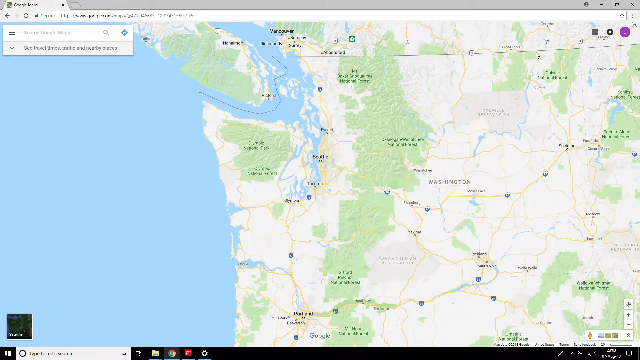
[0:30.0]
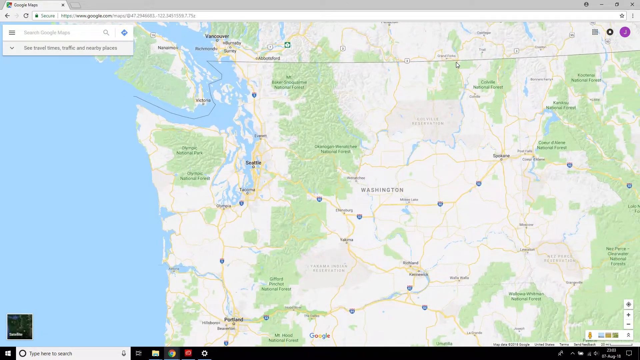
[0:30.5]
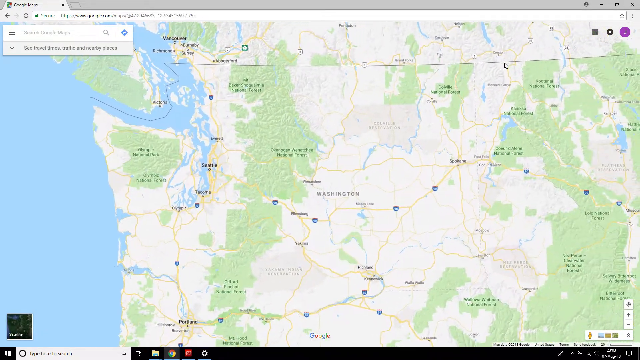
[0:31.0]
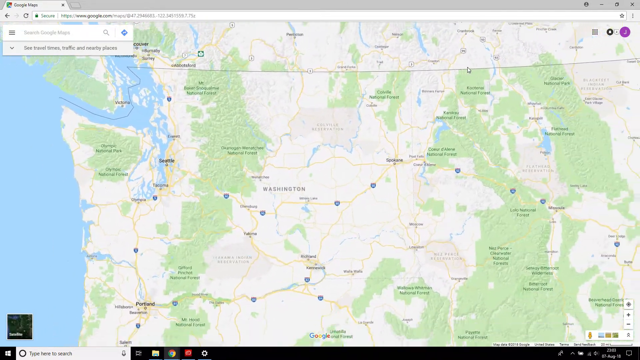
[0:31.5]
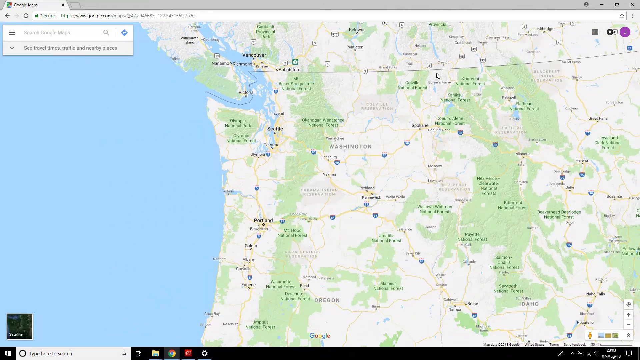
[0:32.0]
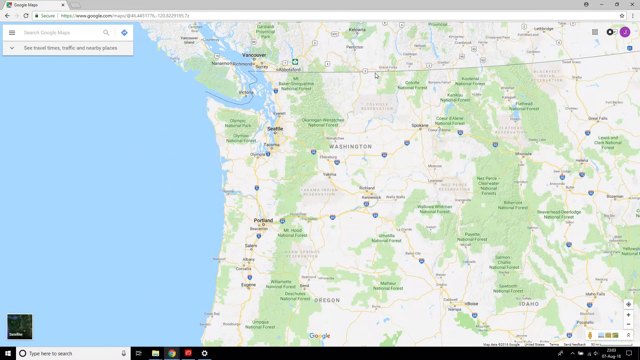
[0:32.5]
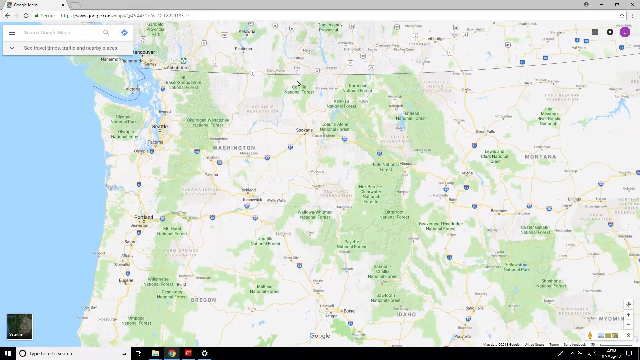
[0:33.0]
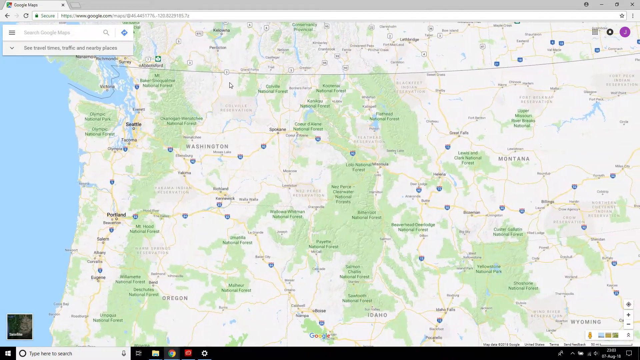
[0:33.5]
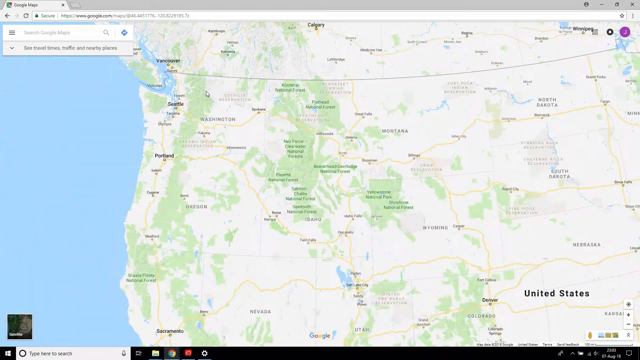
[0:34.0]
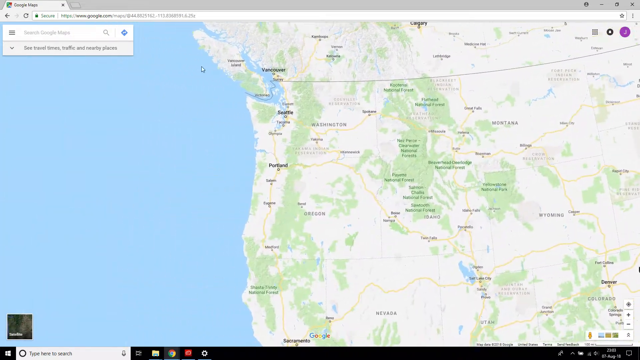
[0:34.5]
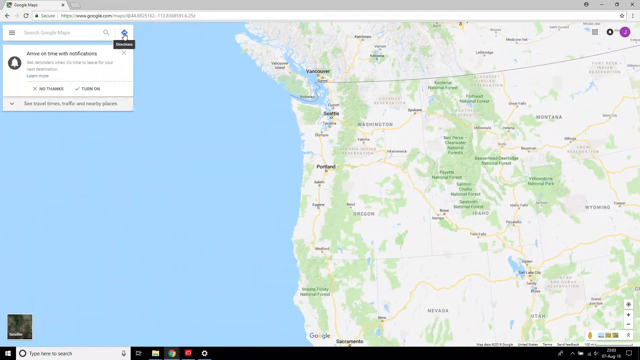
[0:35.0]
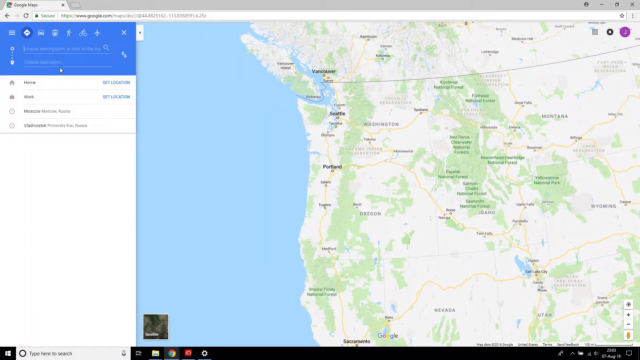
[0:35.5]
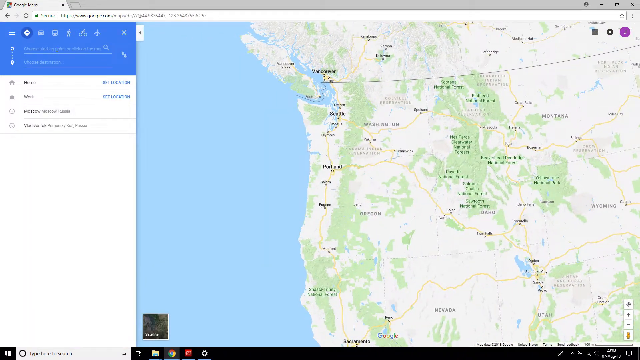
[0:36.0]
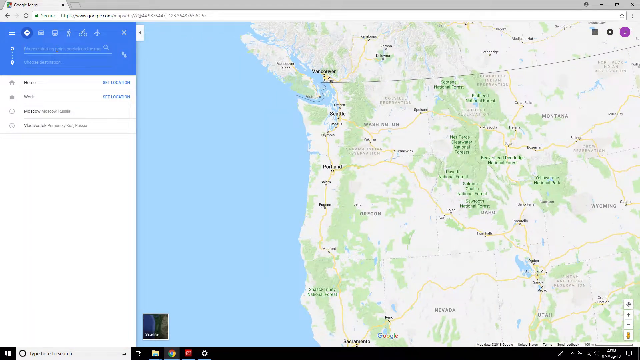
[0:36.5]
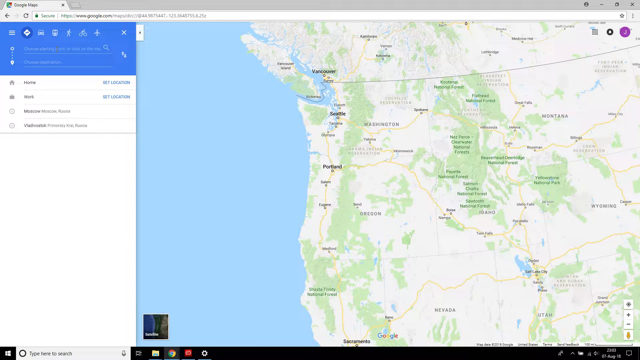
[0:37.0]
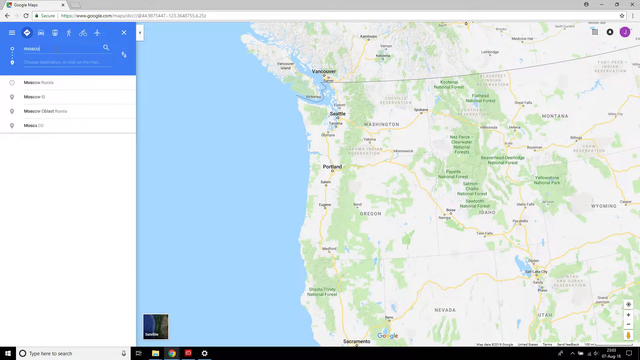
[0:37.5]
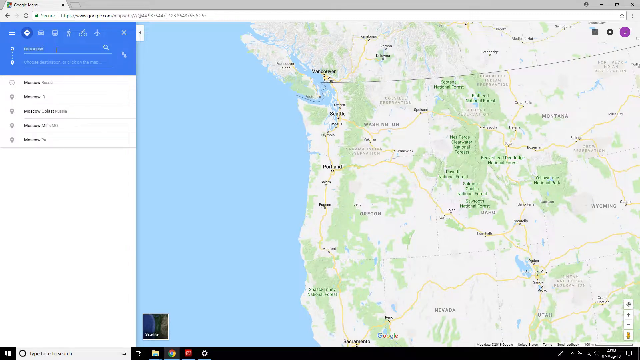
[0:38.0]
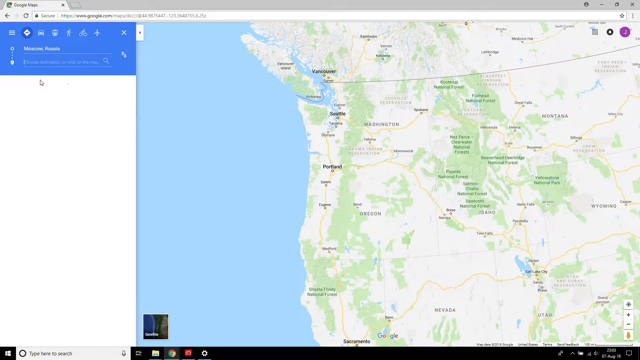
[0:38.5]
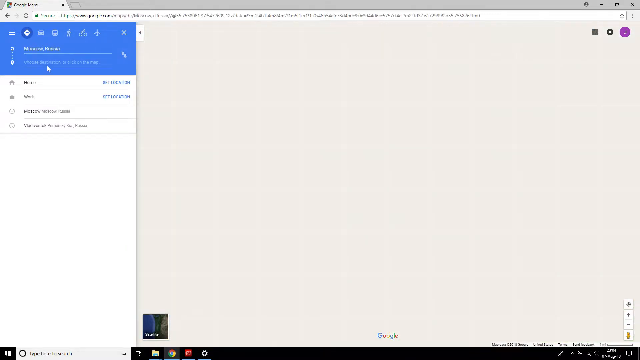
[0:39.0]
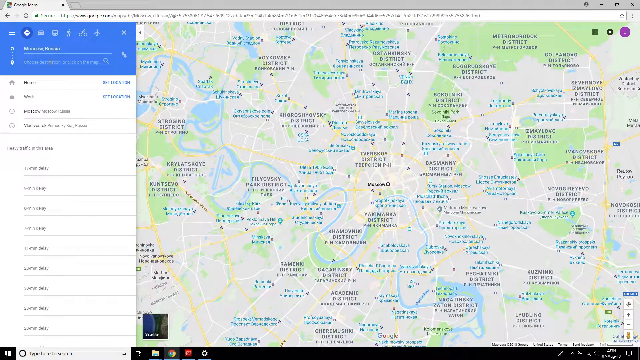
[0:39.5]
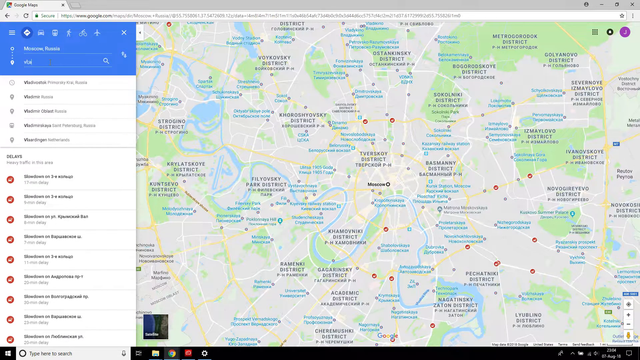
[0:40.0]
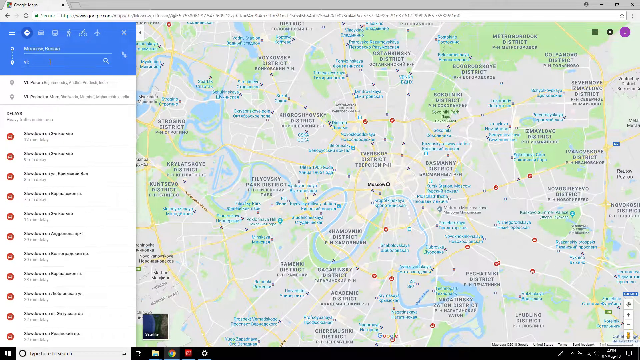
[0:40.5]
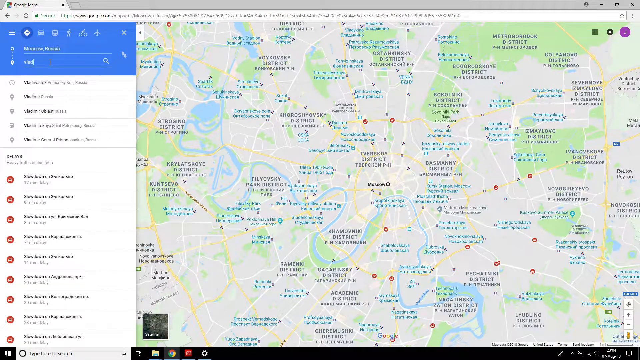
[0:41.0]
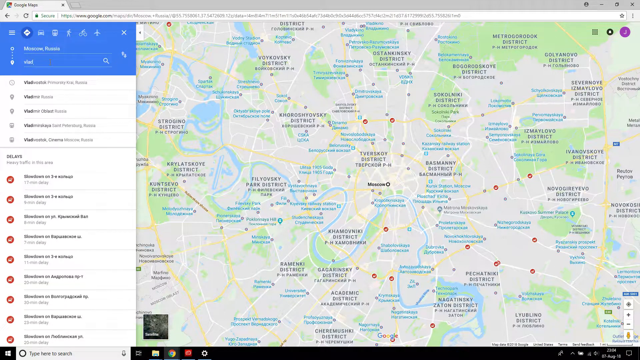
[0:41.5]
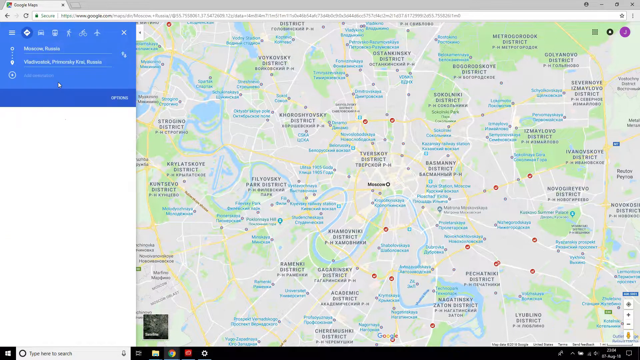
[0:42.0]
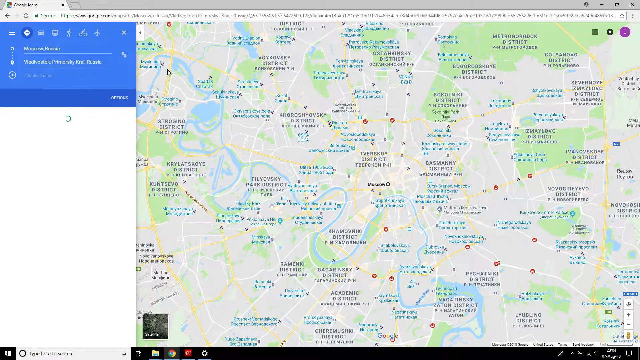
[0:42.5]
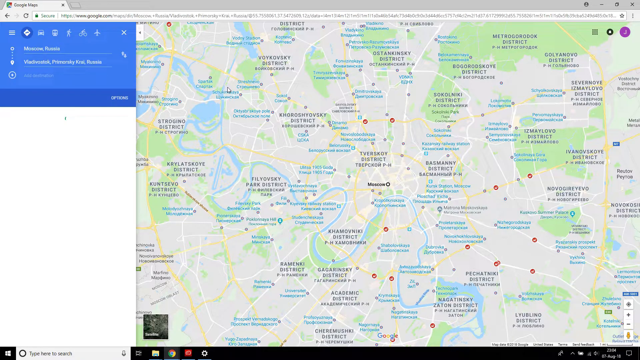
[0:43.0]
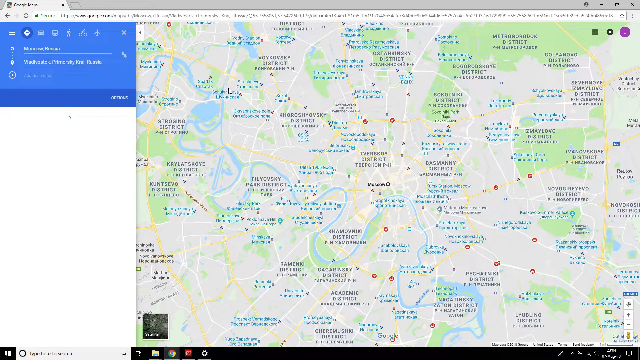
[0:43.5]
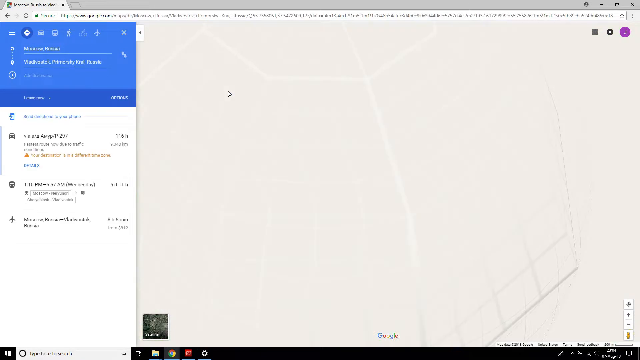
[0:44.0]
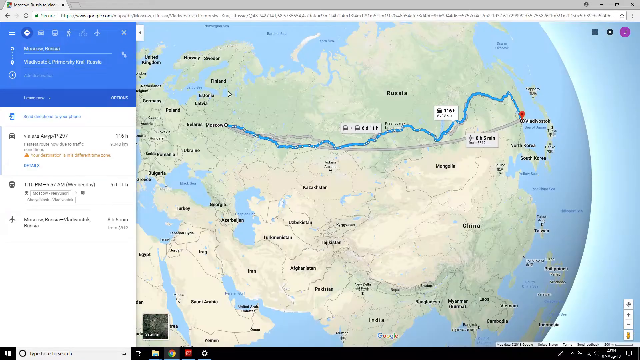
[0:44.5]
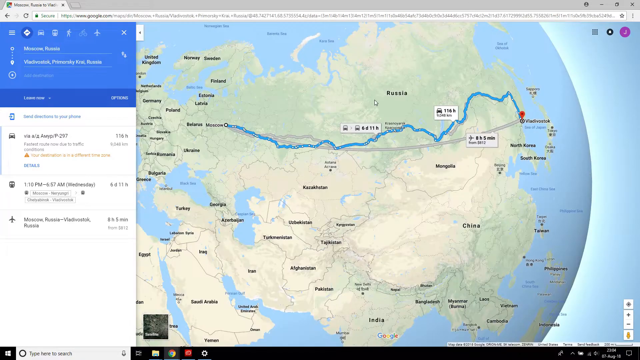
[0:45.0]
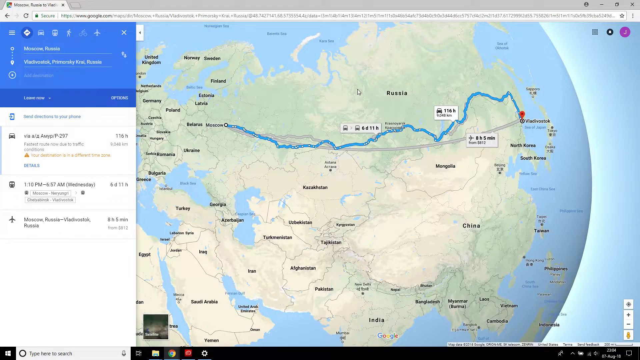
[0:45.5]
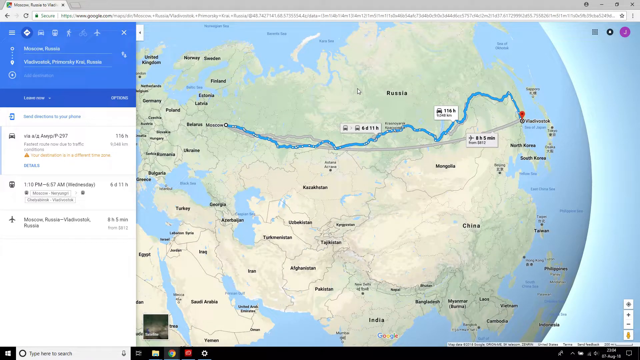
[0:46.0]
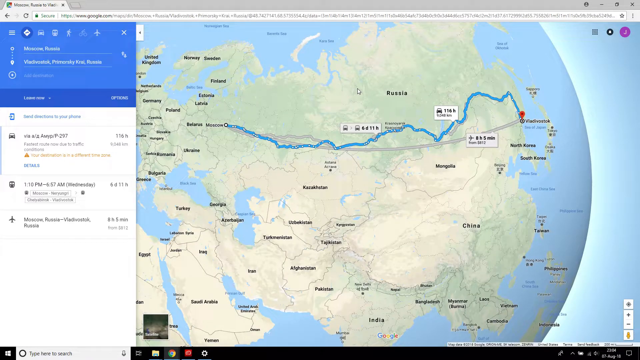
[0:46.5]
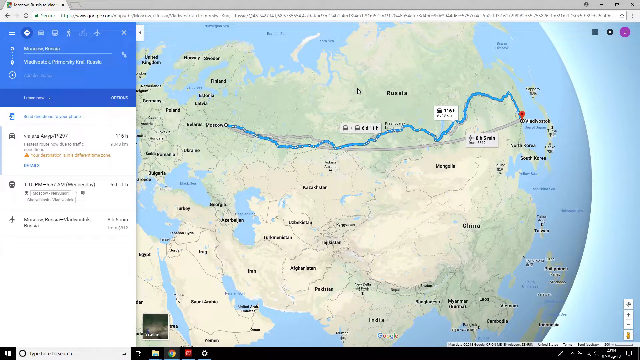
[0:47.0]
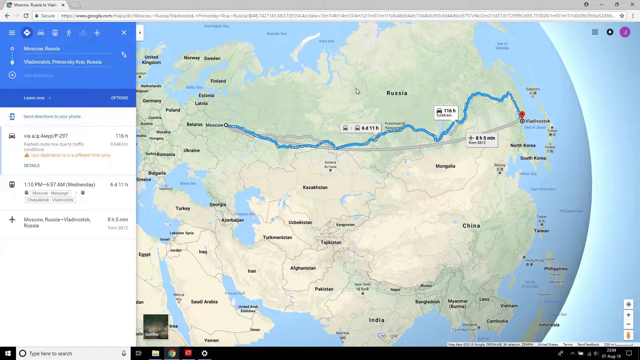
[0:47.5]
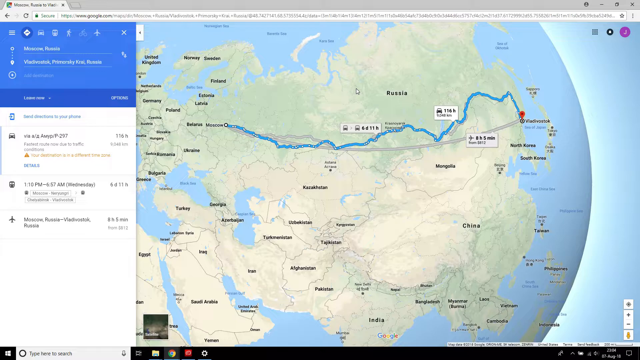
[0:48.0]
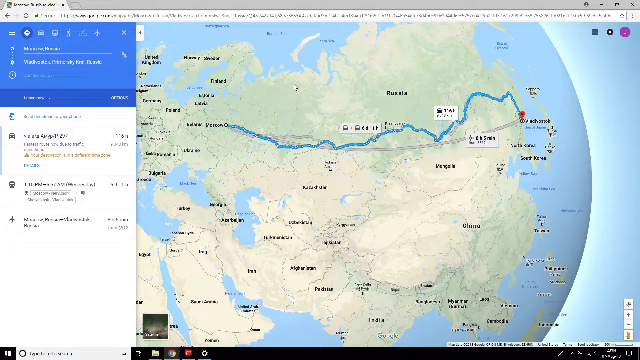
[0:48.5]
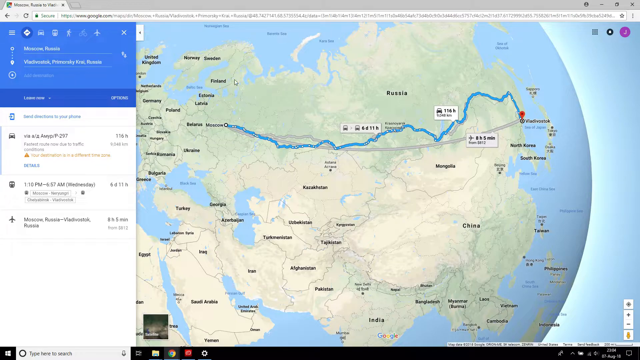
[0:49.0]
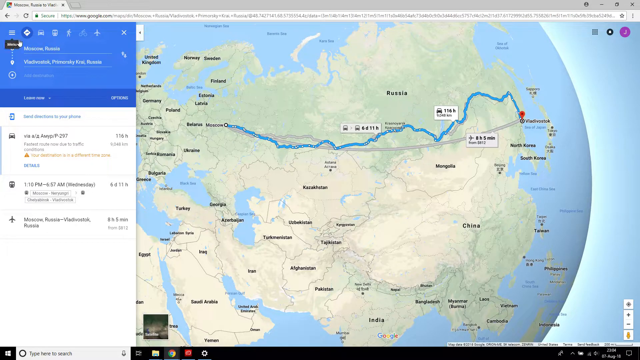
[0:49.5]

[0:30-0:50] The map stays on the same section, which looks to be the northwest of the U.S., apparently Washington. The view moves along the U.S.-Canadian border for a moment, then the screen scrolls over to center the U.S. on the screen, and then scrolls back to the Pacific Northwest. The person opens the Google search feature and types in a location: Moscow. The map then looks to be showing the drive time between two Russian cities.